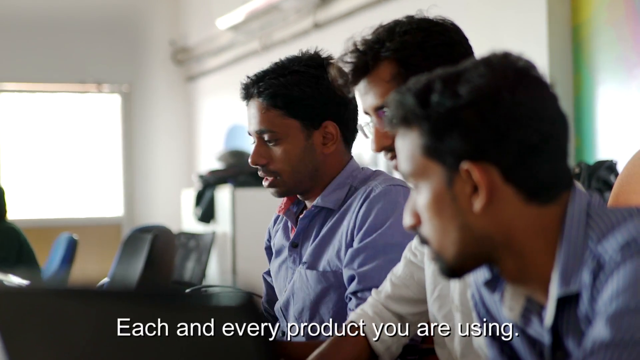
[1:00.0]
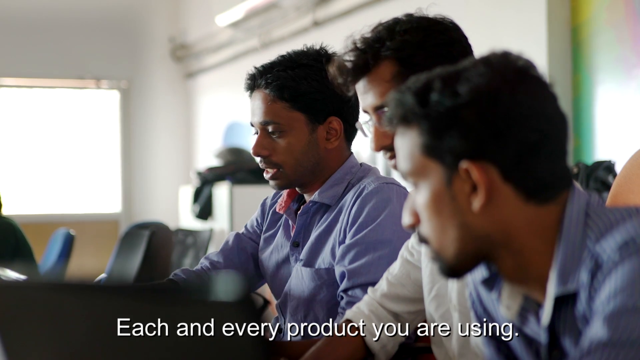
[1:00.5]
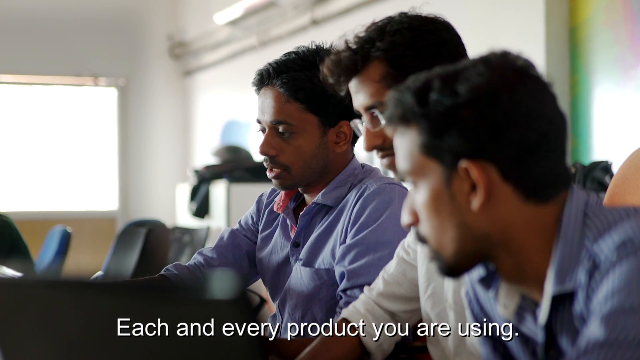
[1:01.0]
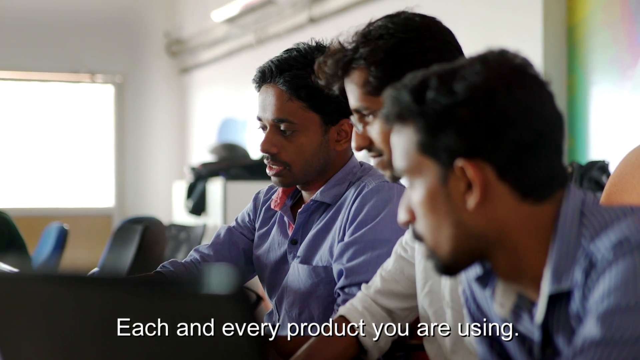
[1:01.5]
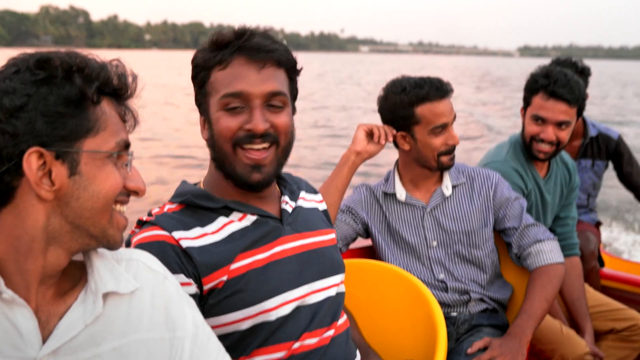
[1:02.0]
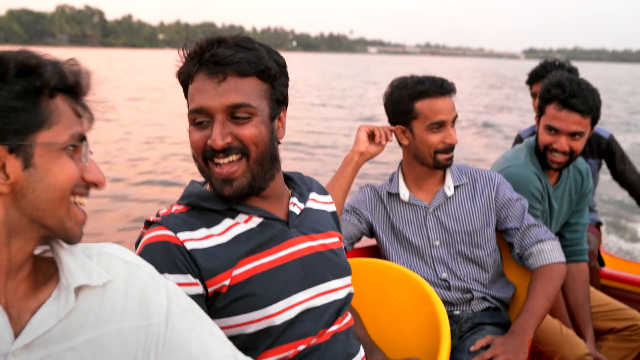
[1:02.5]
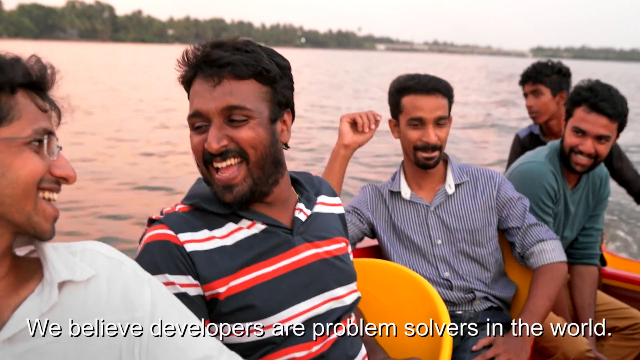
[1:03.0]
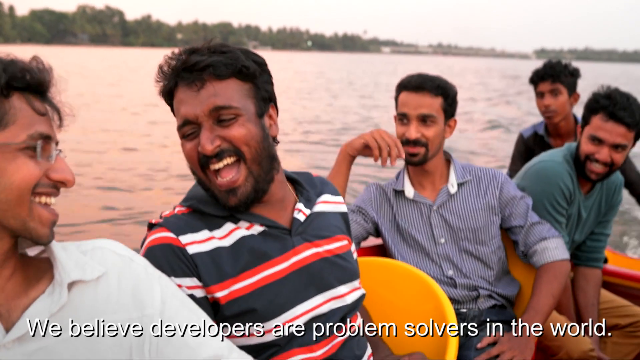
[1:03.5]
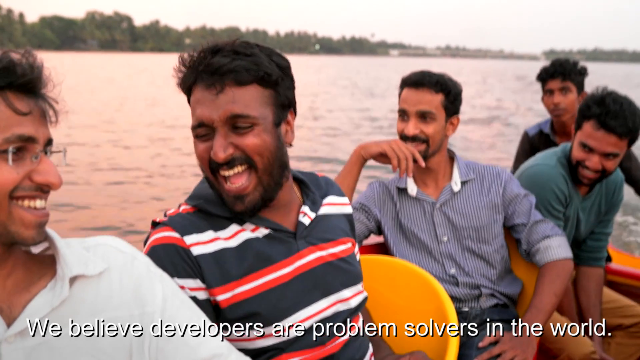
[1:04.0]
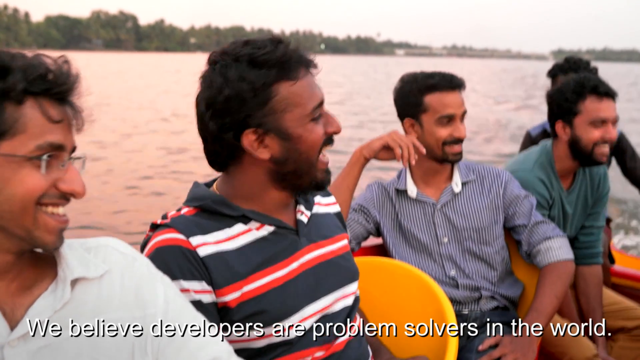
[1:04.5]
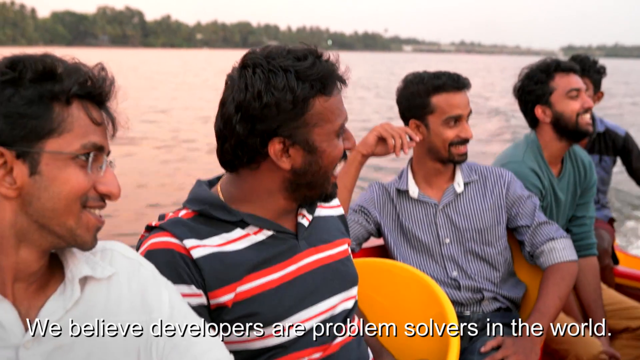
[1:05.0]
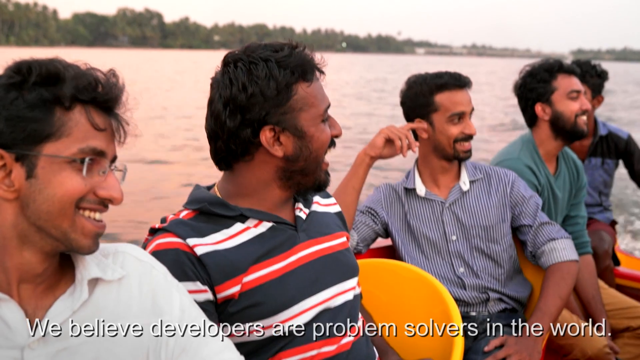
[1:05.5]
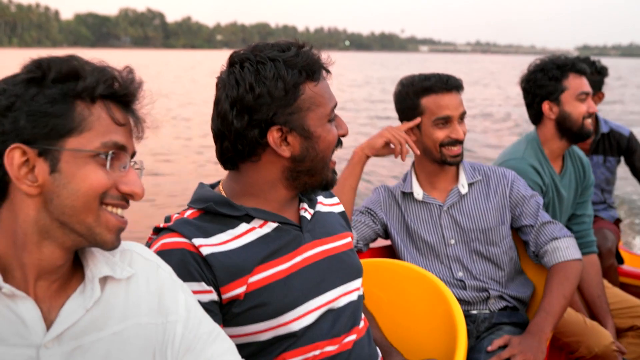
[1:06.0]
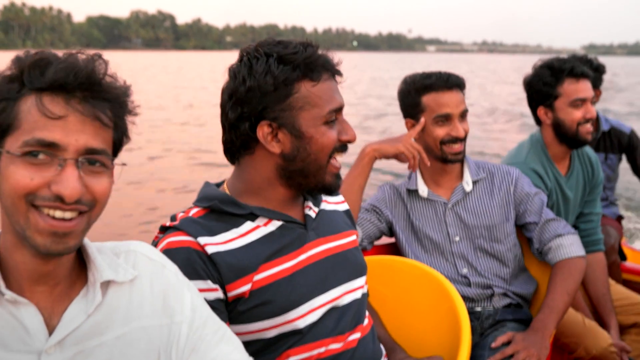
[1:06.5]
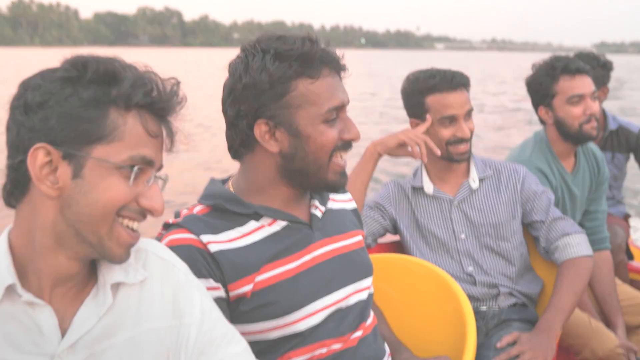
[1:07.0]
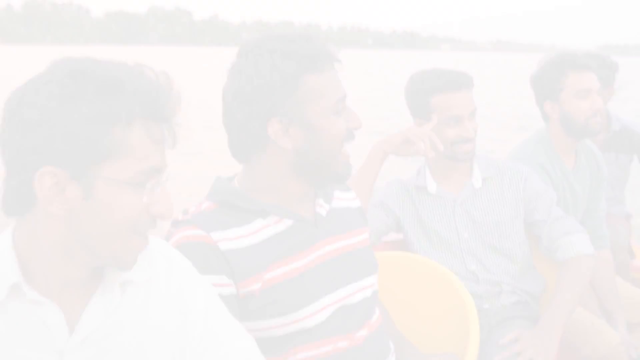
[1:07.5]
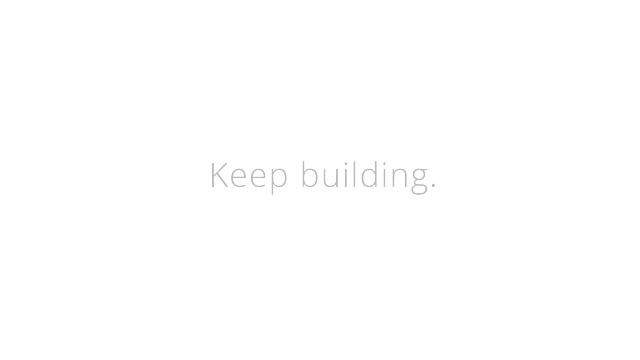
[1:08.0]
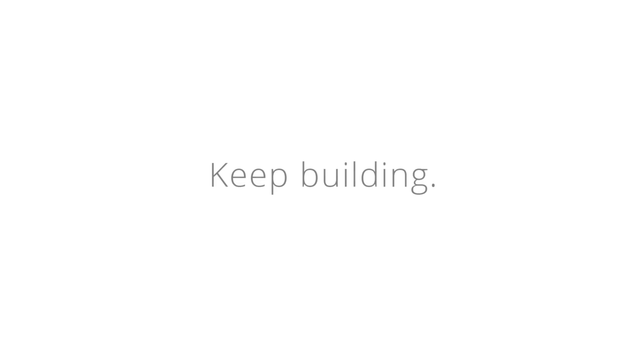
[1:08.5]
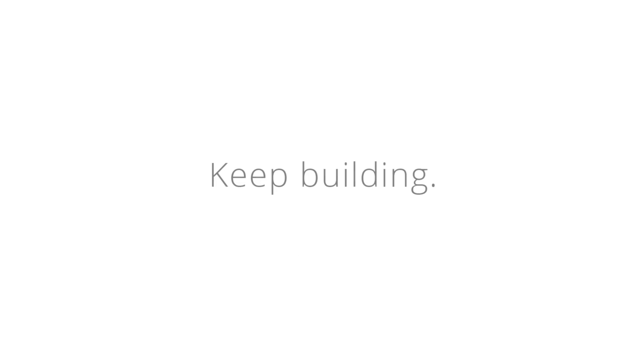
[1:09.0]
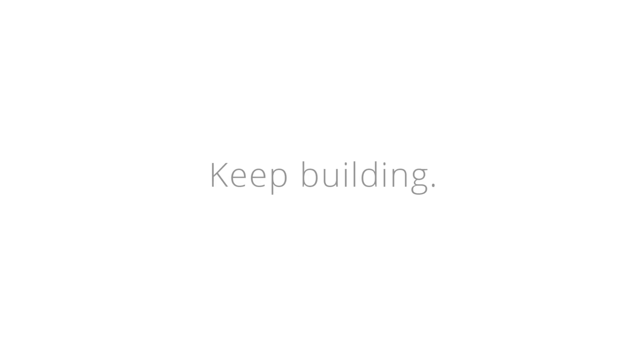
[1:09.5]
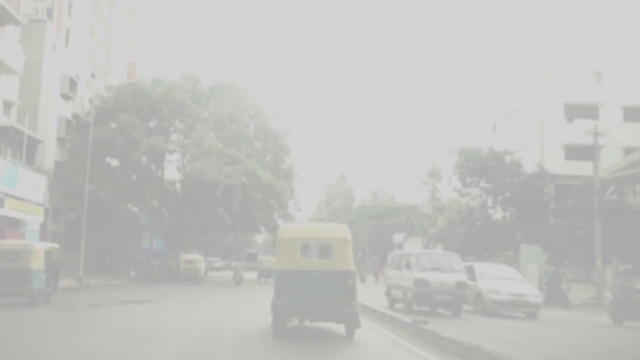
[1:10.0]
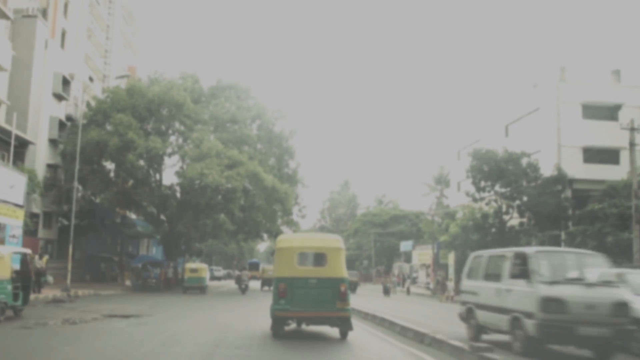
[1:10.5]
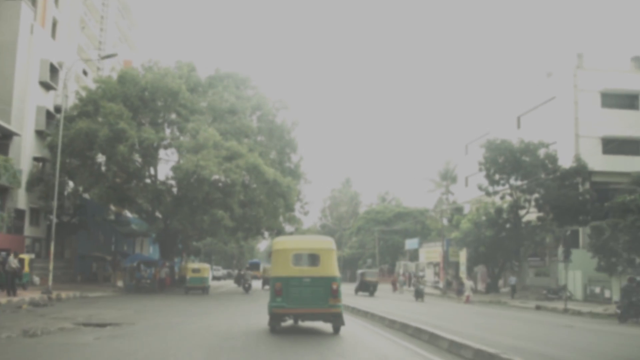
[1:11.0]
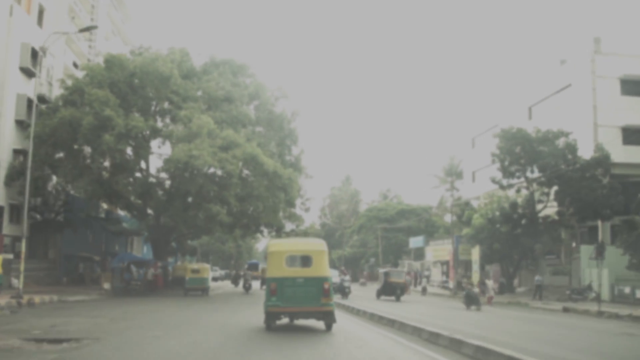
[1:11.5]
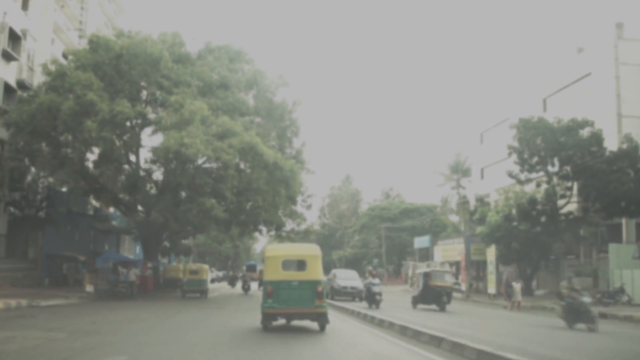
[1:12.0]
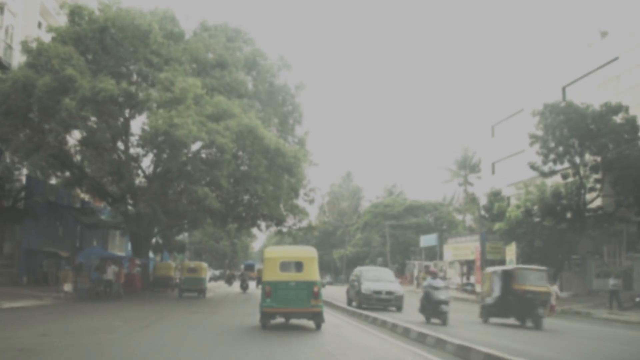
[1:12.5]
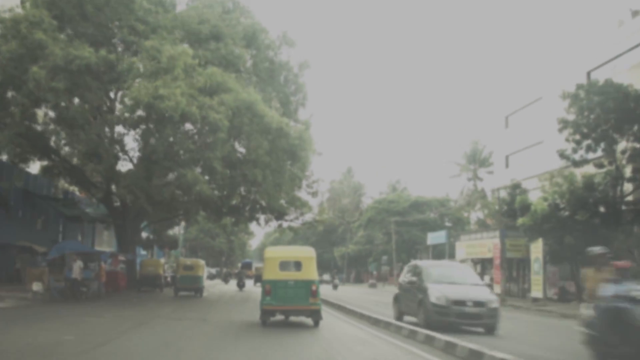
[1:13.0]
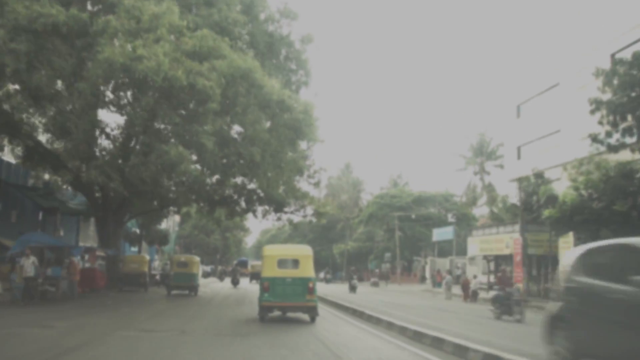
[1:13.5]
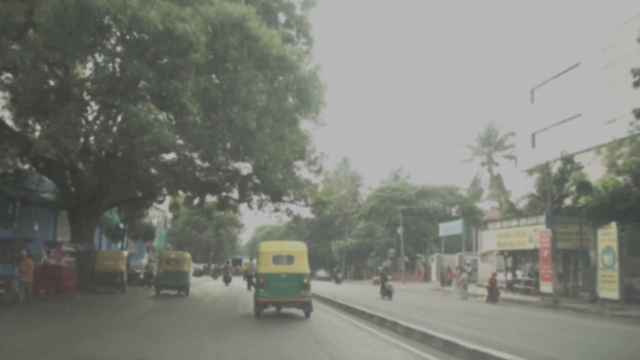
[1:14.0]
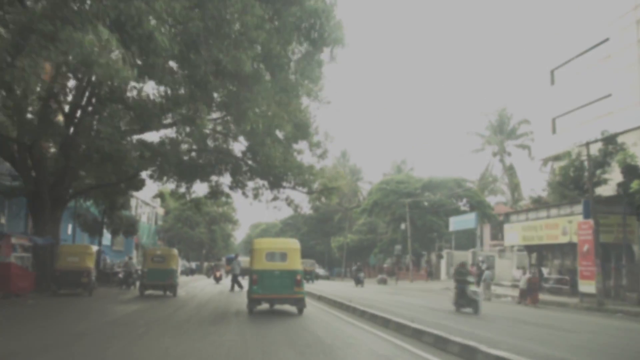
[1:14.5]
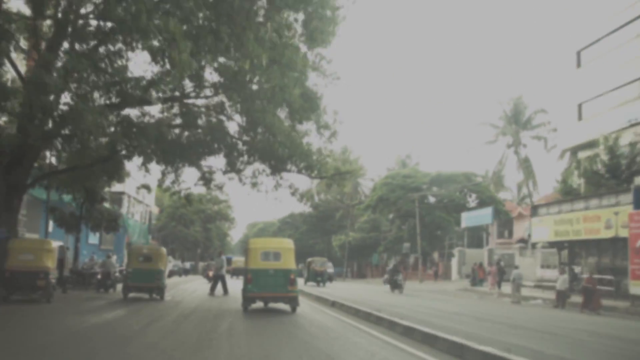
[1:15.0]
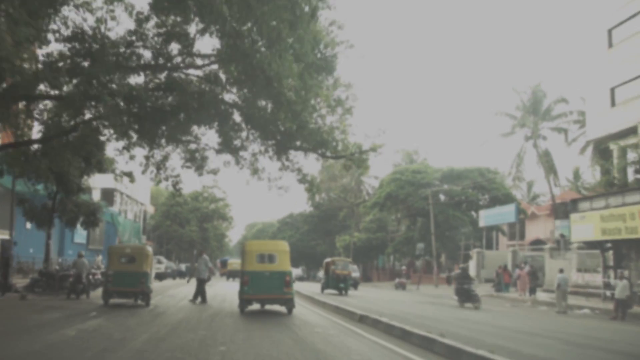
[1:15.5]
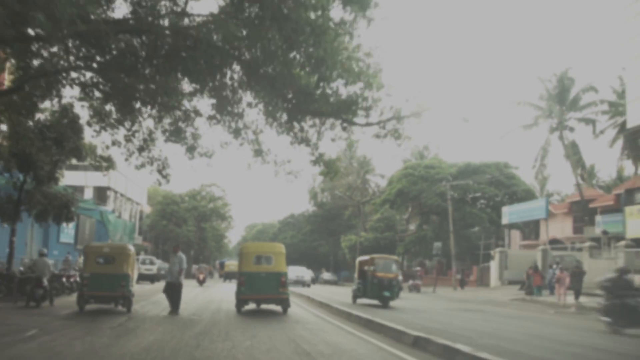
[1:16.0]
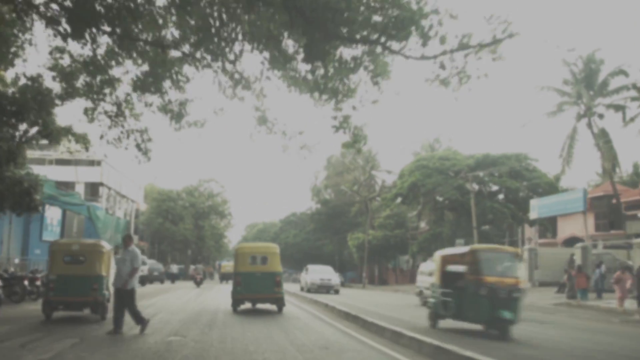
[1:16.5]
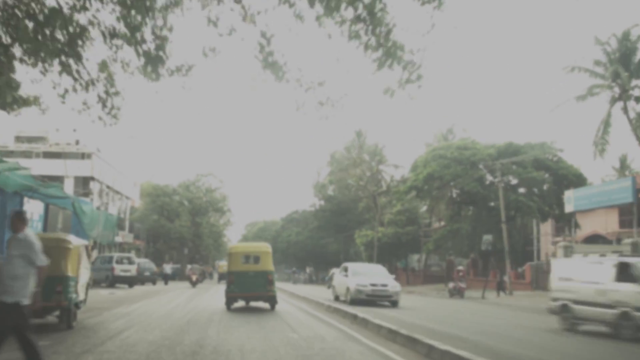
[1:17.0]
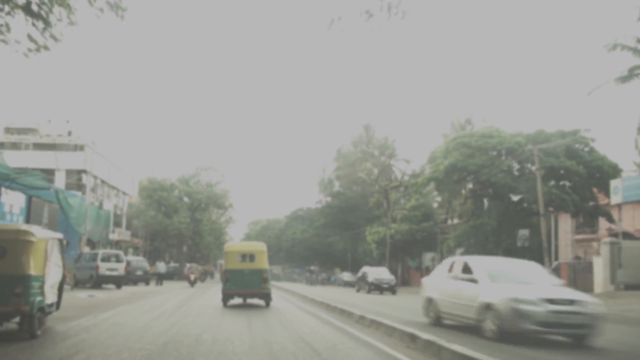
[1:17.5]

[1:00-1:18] Text below reads "each and every product you're using". The men are at first sitting in a sort of board room. While the text is displayed, young men, seemingly Indian, ride along in a kind of boat on either a river or near a shoreline, apparently the same men. They are laughing and talking to each other and all seem to face the camera, moving along at a pretty good motorized speed. They wear different kinds of shirts, mostly short-sleeved: the man on the left has a gray shirt, the one to the right of him has a horizontally striped shirt, and the rest wear light-colored shirts.